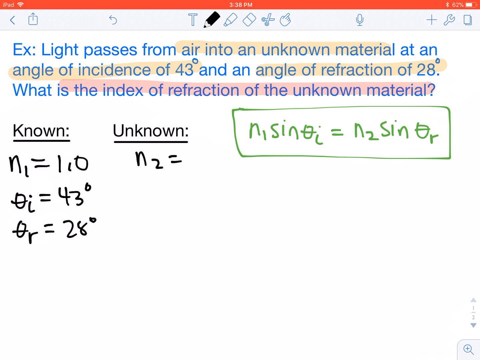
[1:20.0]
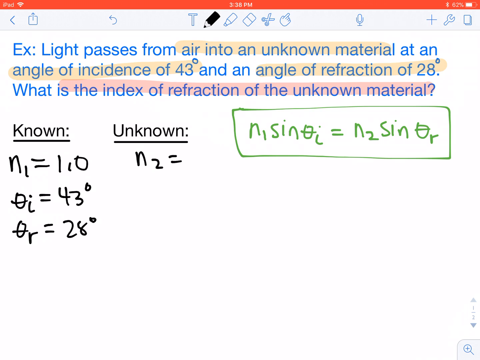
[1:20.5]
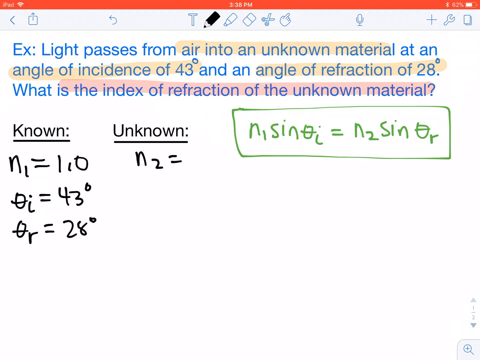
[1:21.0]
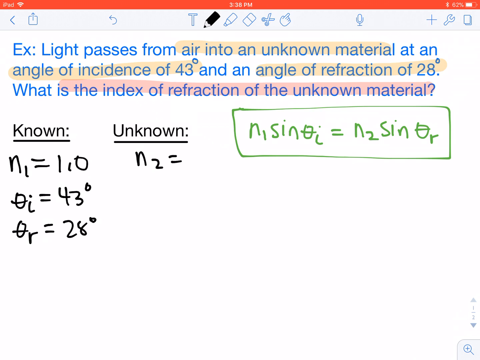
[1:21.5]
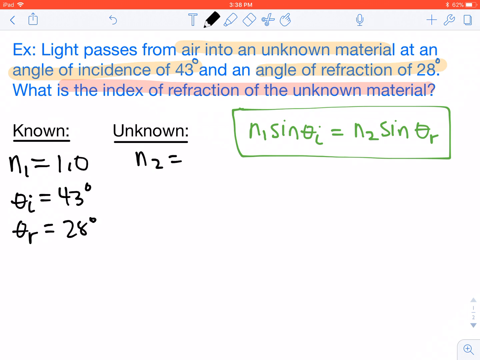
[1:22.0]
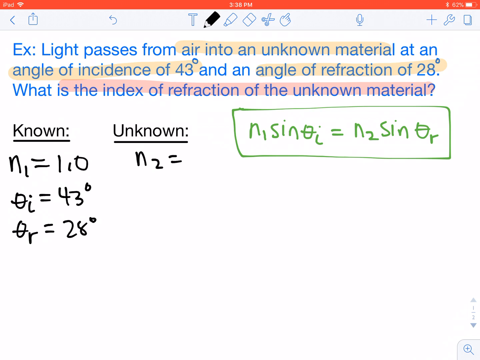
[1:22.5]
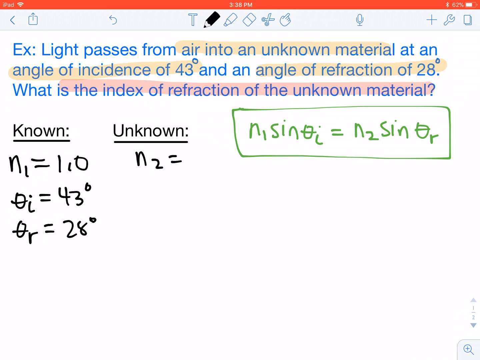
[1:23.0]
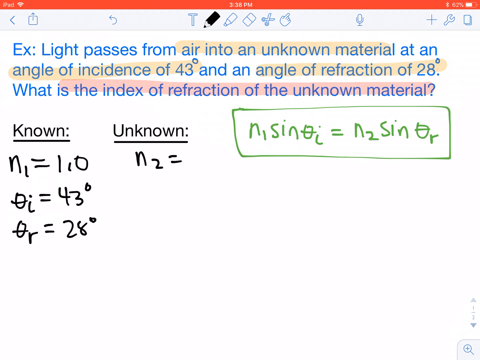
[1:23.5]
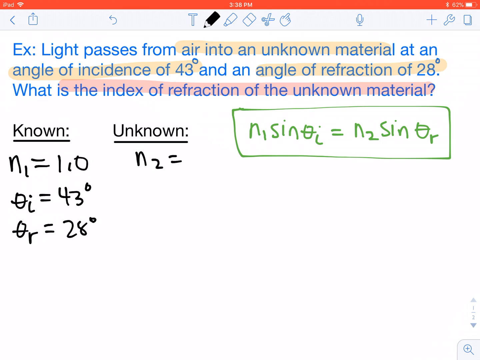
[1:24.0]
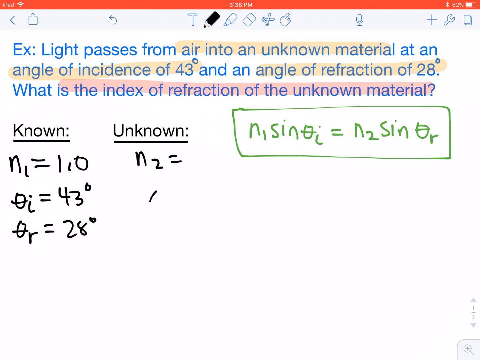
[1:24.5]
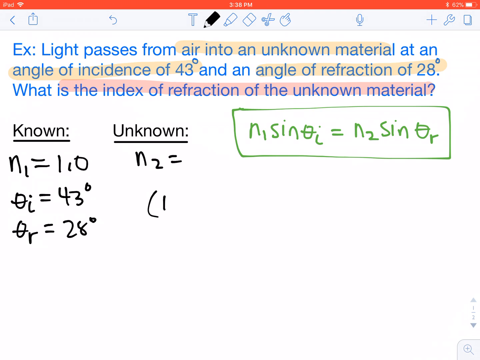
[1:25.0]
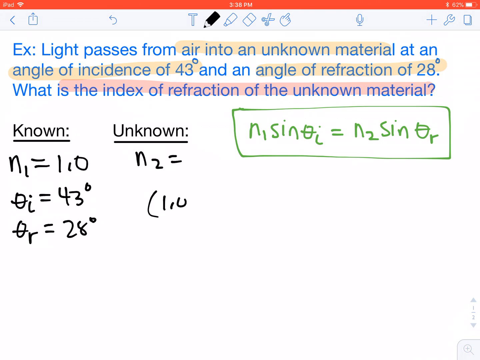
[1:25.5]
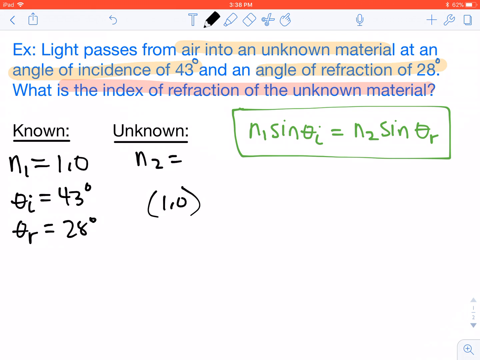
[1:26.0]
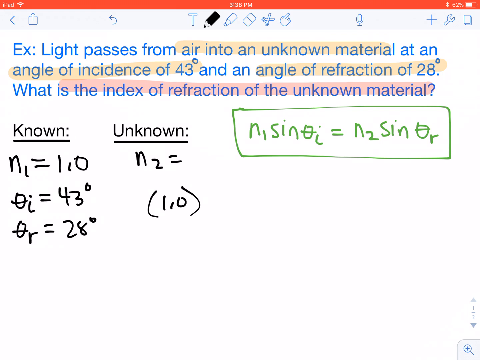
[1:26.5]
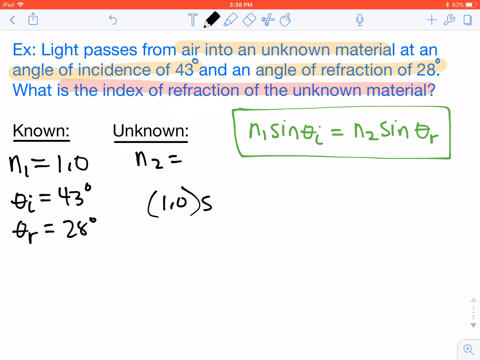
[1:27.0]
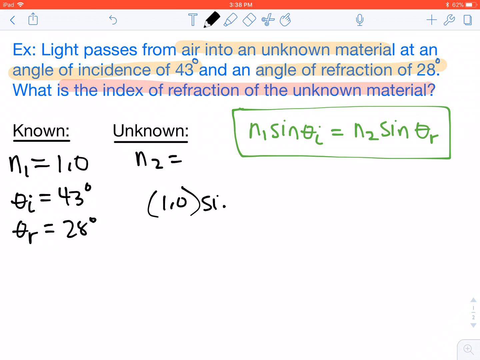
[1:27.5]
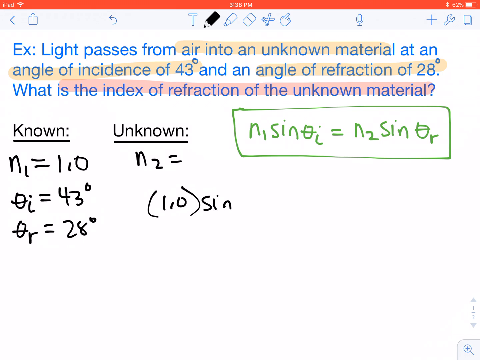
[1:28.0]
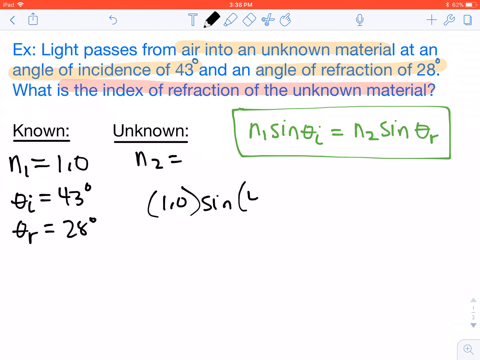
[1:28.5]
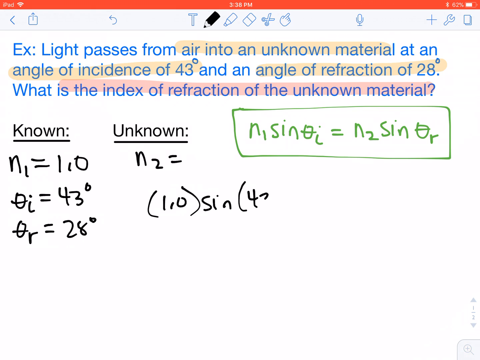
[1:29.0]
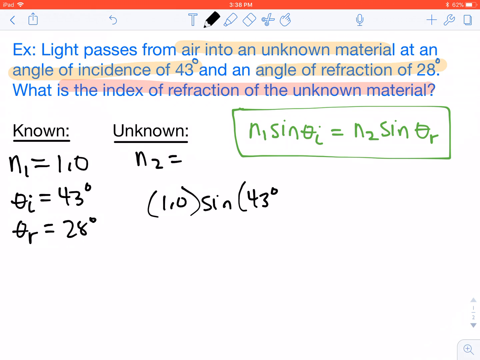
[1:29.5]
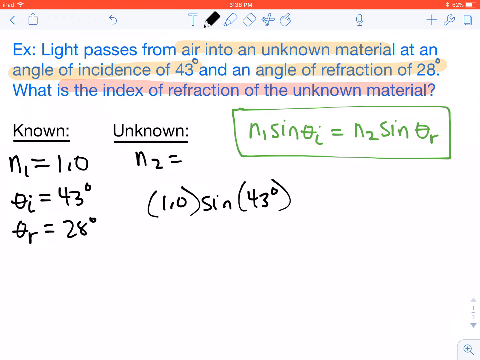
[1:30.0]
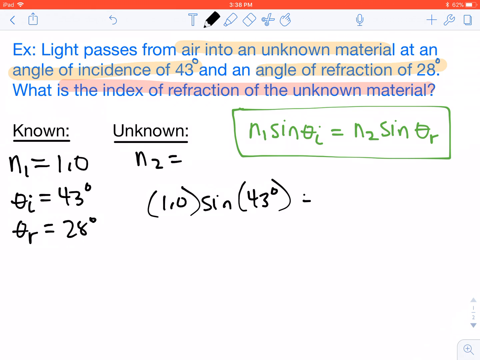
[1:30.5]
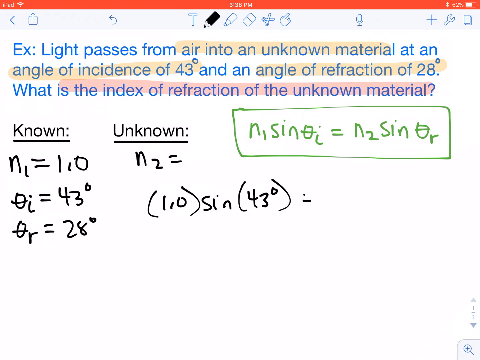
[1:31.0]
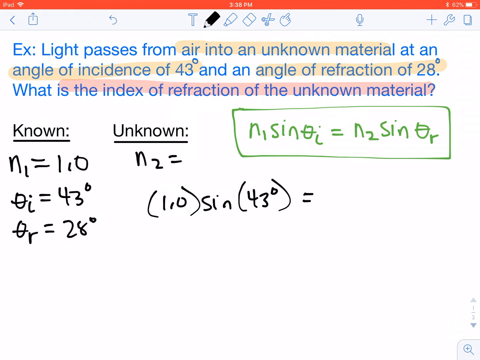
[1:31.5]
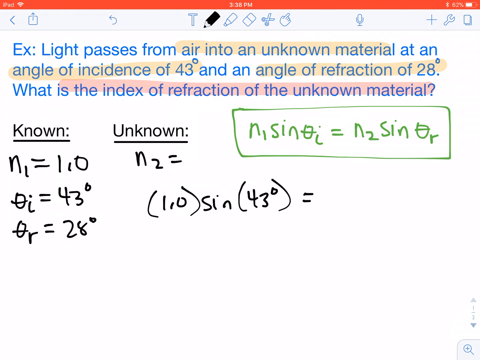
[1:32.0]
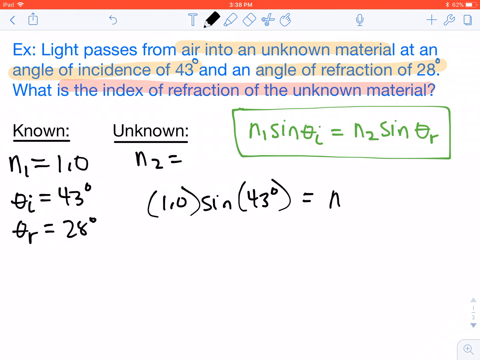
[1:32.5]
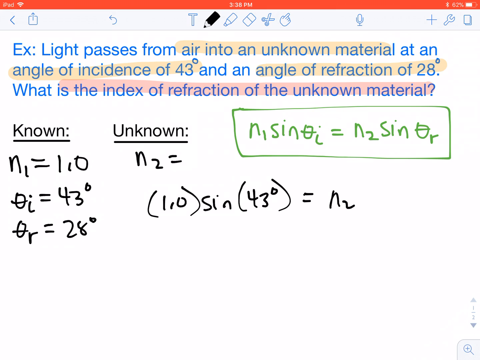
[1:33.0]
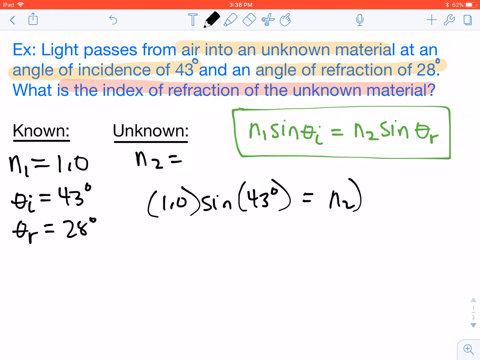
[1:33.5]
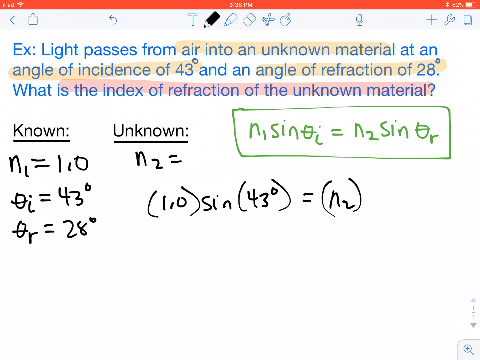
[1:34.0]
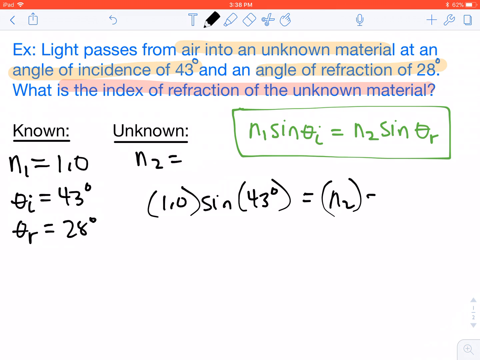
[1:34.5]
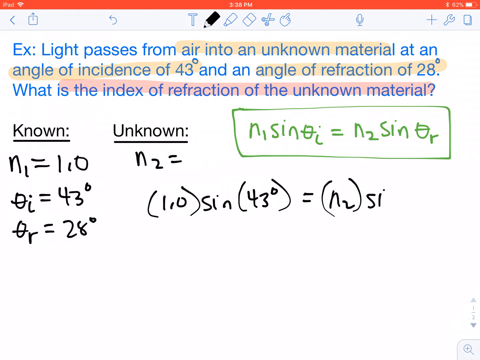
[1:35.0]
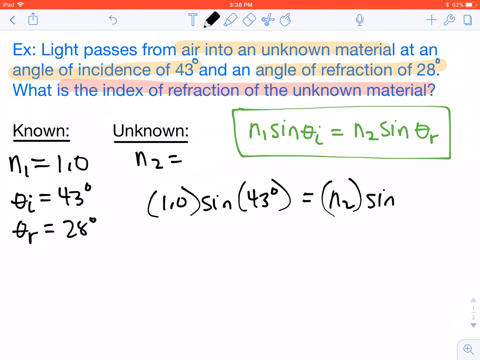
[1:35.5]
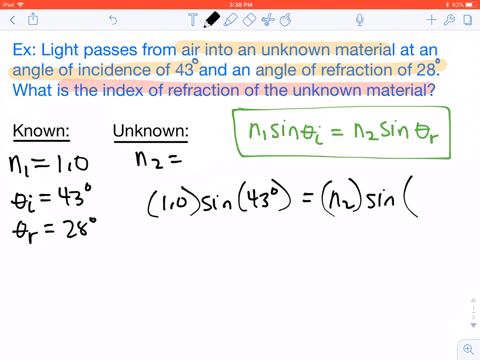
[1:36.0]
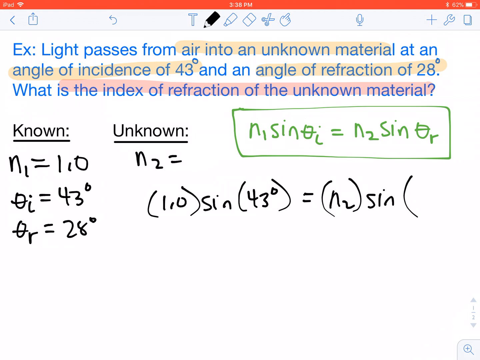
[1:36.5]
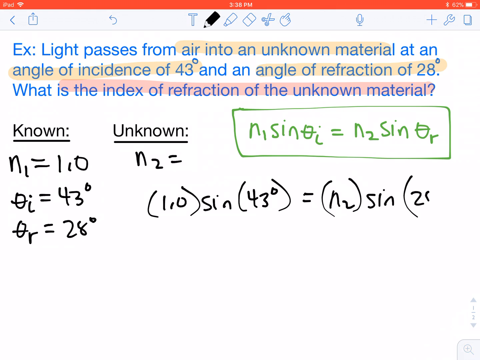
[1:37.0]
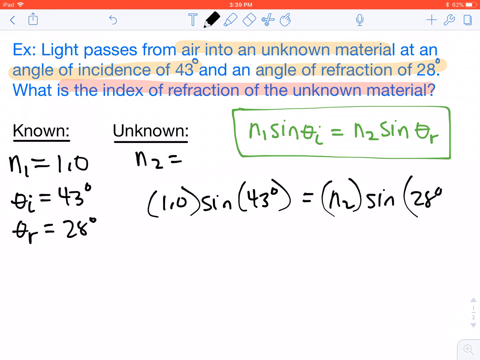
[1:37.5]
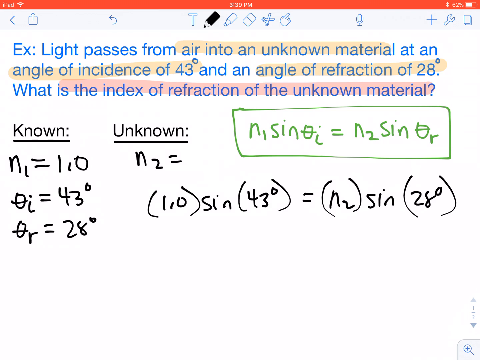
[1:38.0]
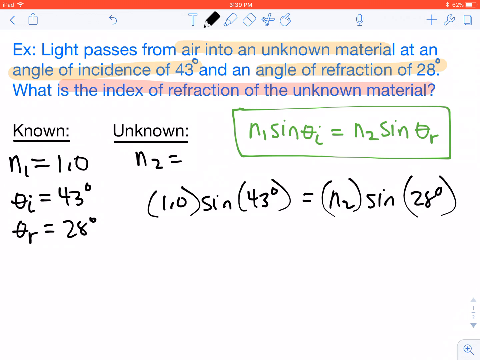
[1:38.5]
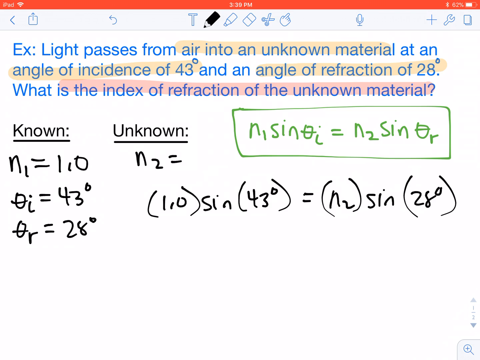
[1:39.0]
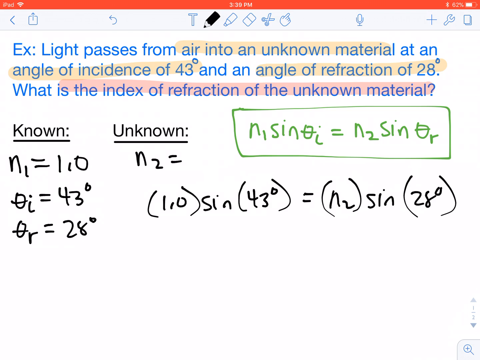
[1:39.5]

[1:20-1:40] Underneath the "n2 =" in the unknown column, he now writes "(LIO) sin (43 degrees) = (n2) sin (28 degrees)", apparently combining the known and unknown parts into one equation.